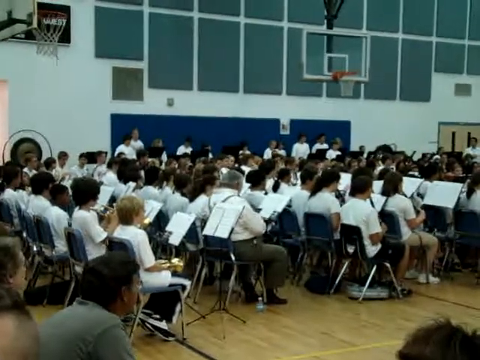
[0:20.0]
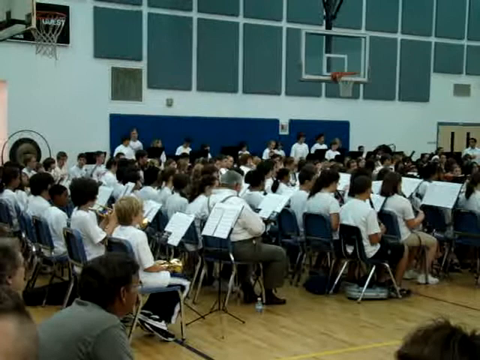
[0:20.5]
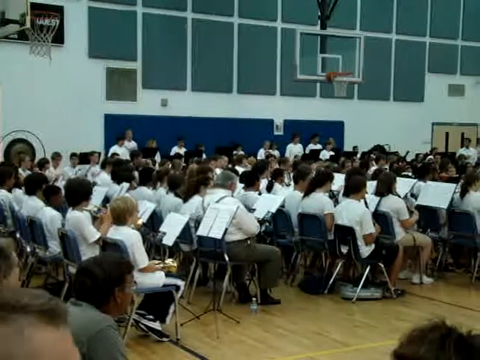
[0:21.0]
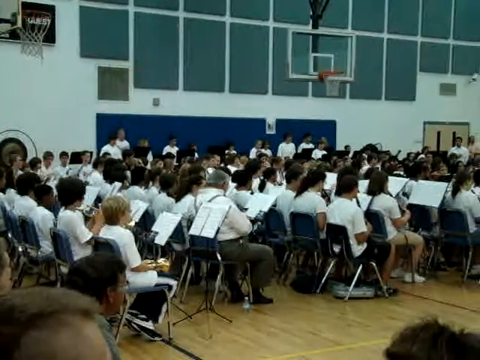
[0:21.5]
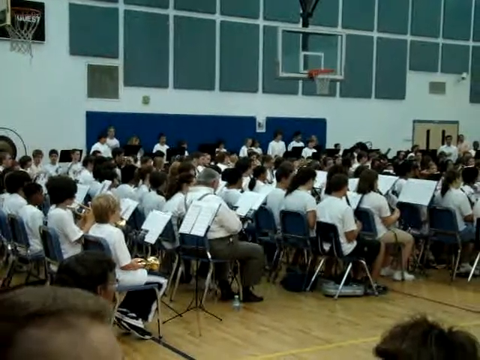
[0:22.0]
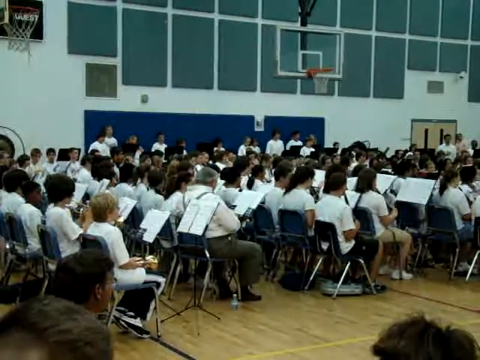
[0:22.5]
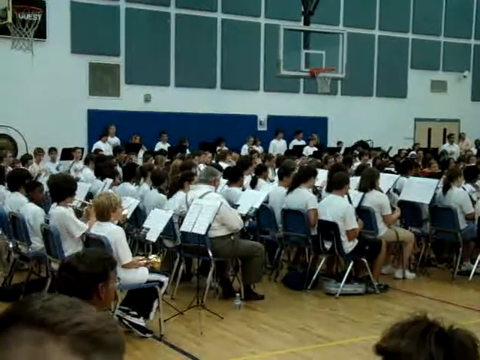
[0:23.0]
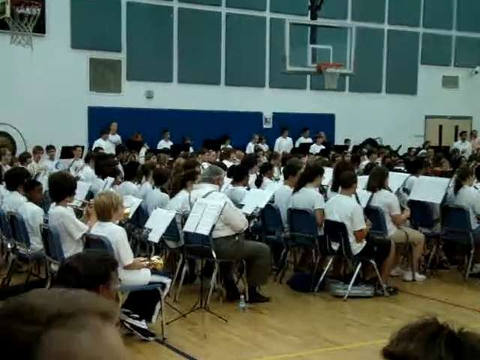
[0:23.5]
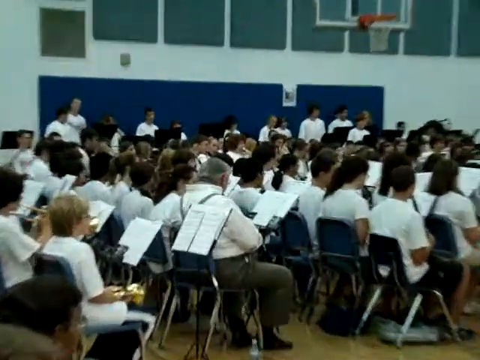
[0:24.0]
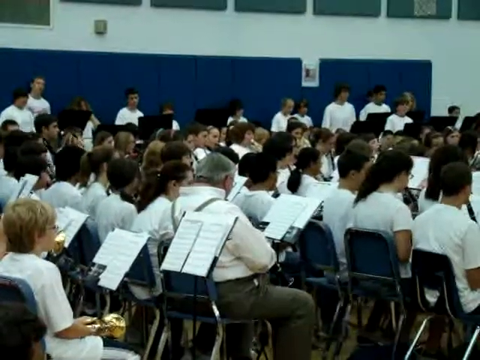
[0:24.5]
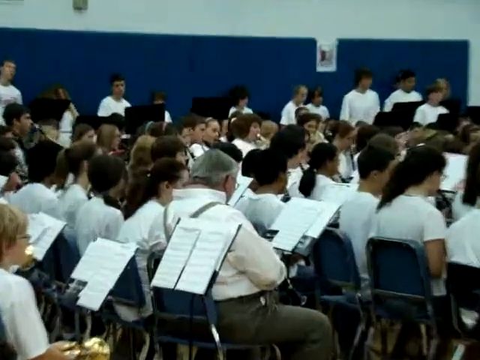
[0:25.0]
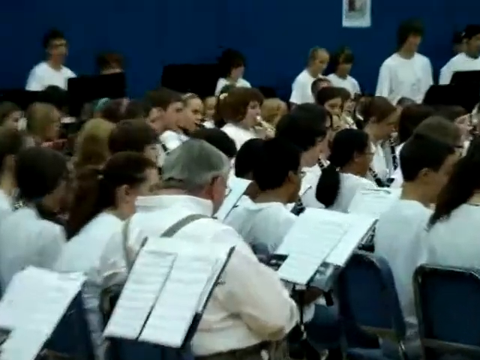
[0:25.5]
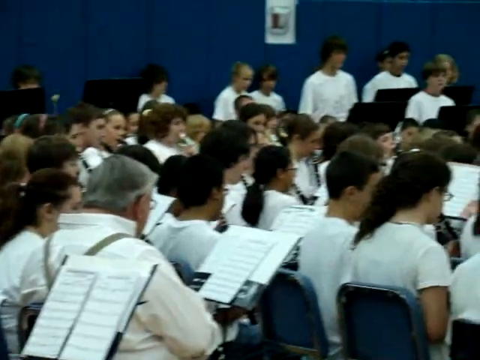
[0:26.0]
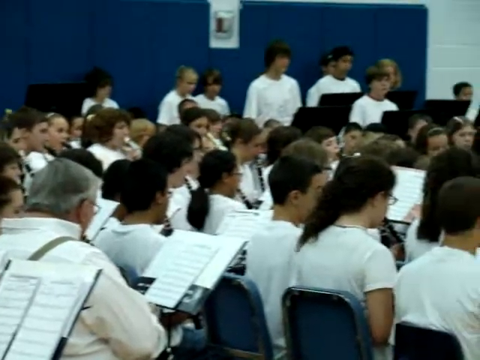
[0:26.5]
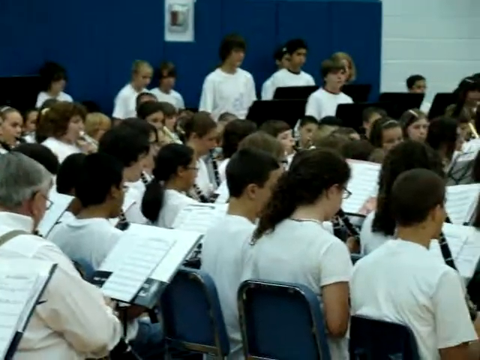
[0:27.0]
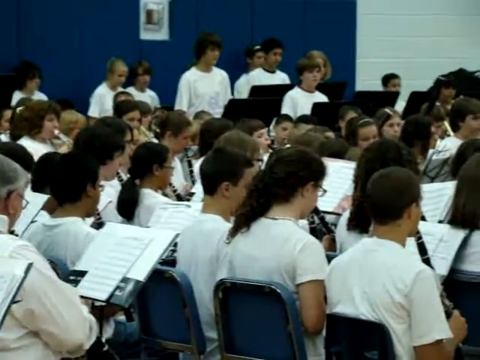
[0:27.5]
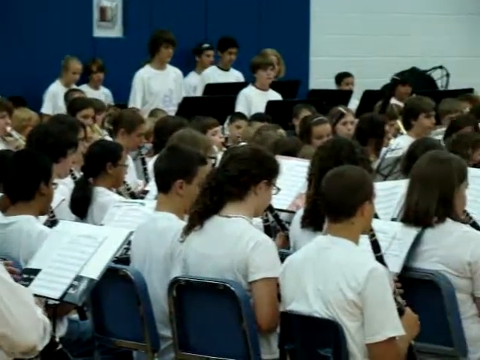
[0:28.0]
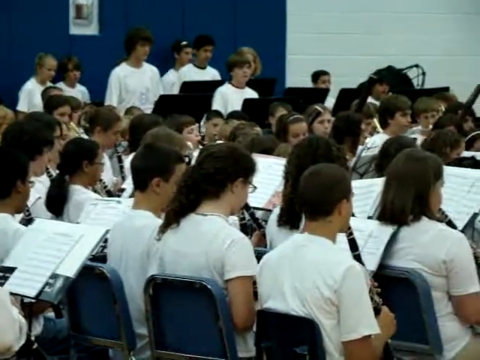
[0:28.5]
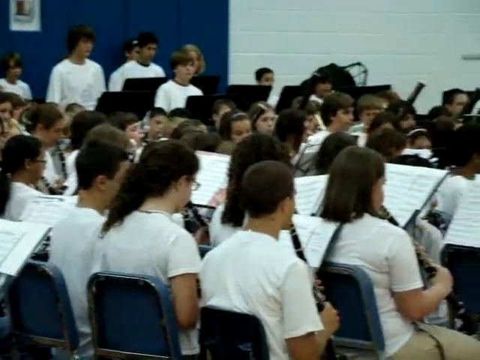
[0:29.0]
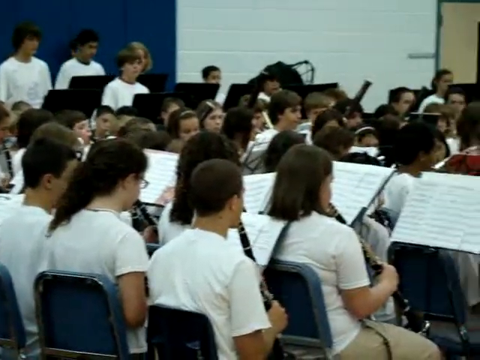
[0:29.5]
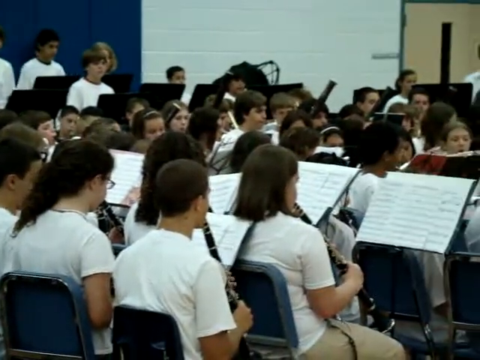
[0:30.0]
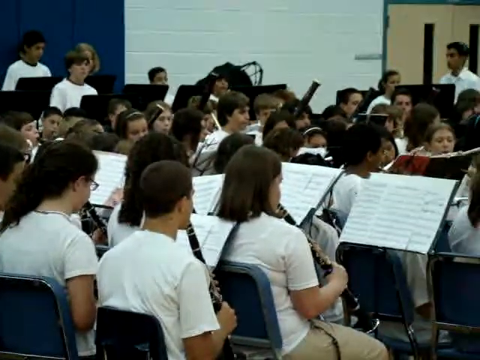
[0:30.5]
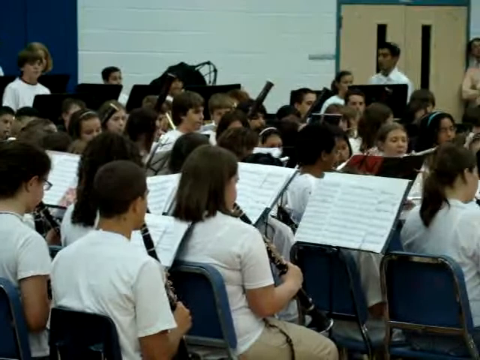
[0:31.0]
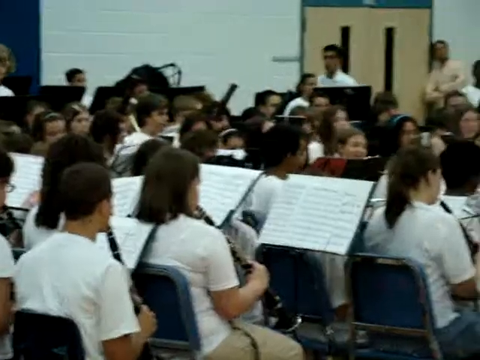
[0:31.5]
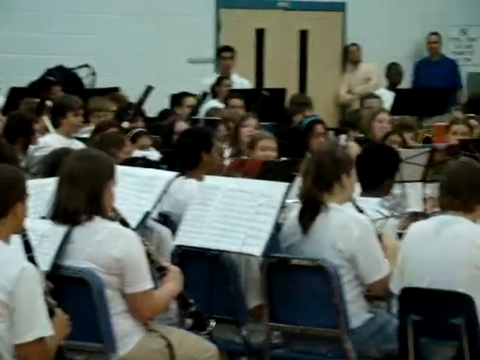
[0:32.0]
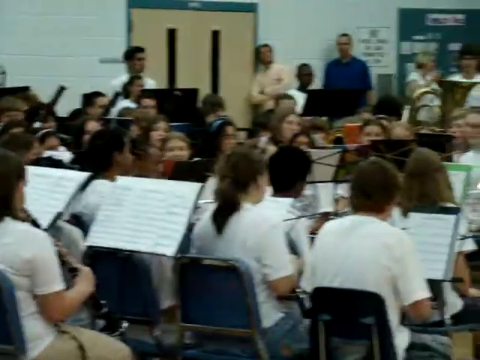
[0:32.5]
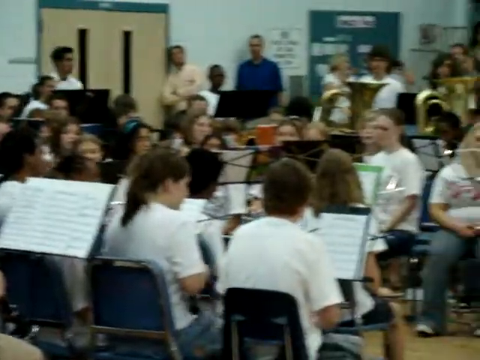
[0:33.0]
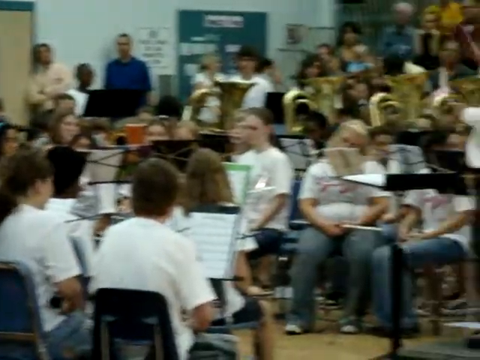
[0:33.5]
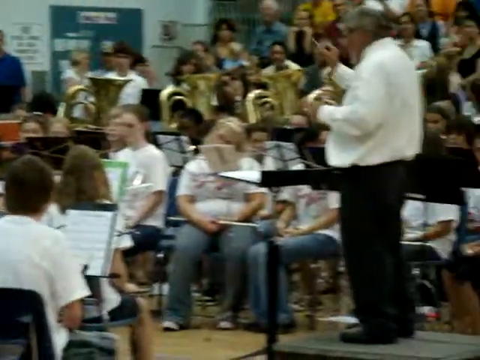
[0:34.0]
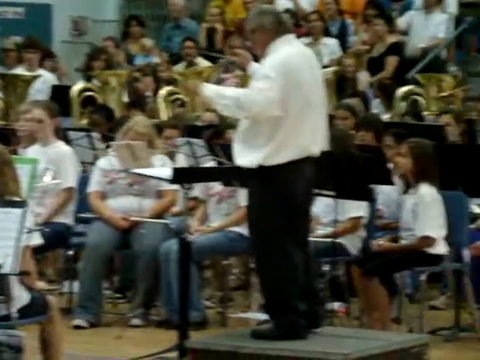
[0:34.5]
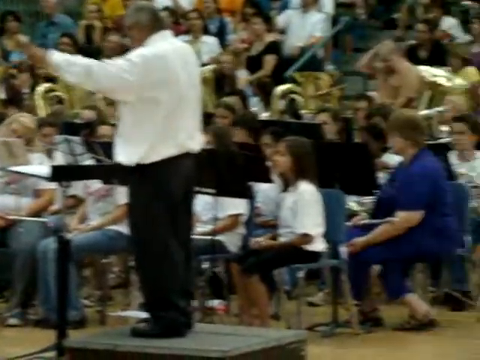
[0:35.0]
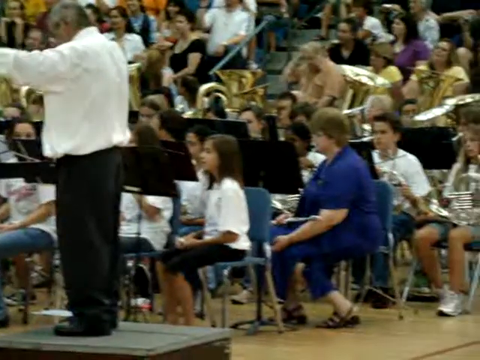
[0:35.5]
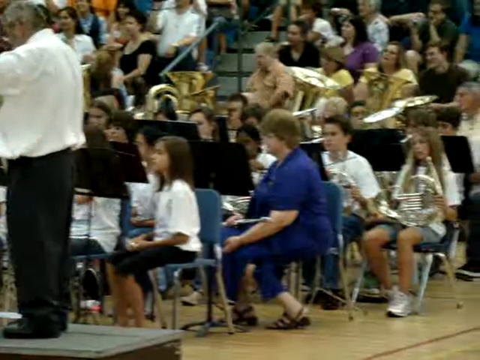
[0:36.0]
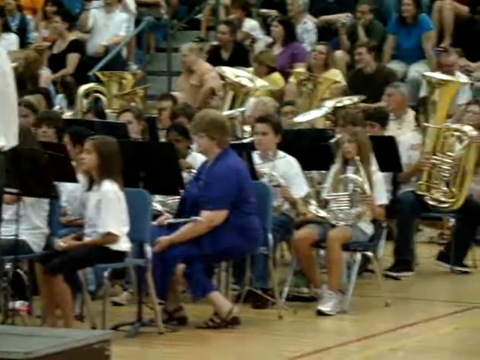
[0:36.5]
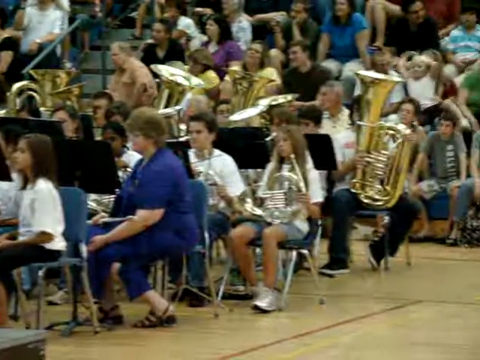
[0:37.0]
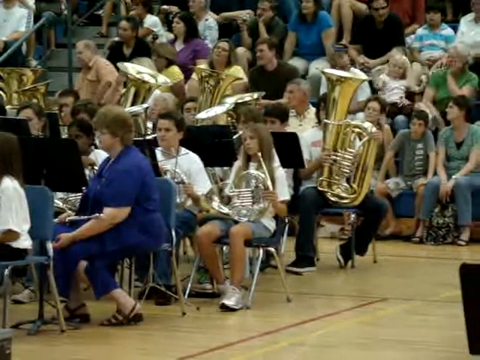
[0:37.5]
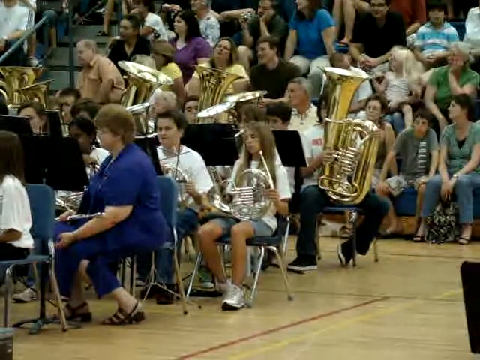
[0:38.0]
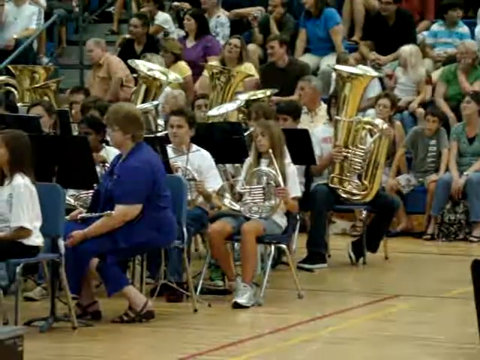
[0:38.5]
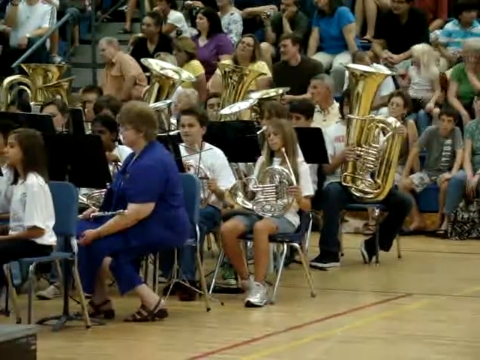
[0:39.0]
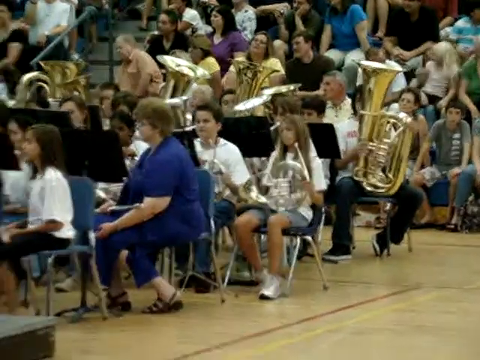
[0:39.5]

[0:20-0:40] A bunch of children are all seated in blue chairs, with instruments and music sheets in front of them. A basketball hoop kind of hovers over them, and another, clear basketball hoop is on the right side. There are a bunch of blue tiles on the wall. The camera stays focused on the seated people, then slightly zooms into a man who is also seated and looking at a sheet of music. The camera slowly zooms in, showing the other seated children playing their instruments, which look like clarinets or flutes. It continues to zoom in to show the composer, who moves his arms to assist the children in their performance. Some other children have bigger instruments, and a bunch of people sit in the bleachers watching the performance. The camera then slowly zooms out again.